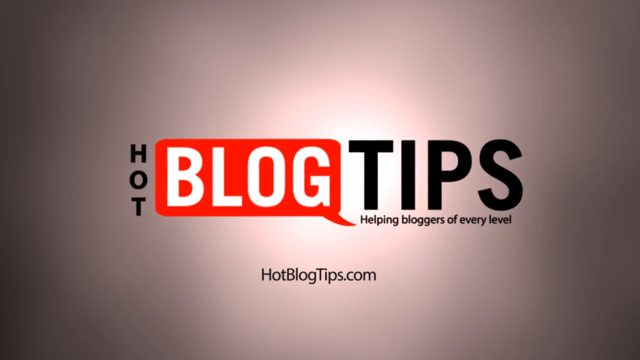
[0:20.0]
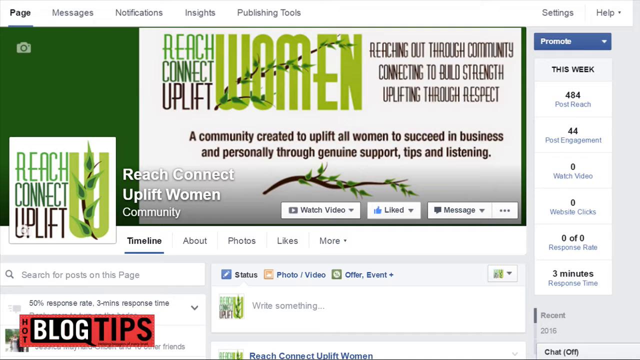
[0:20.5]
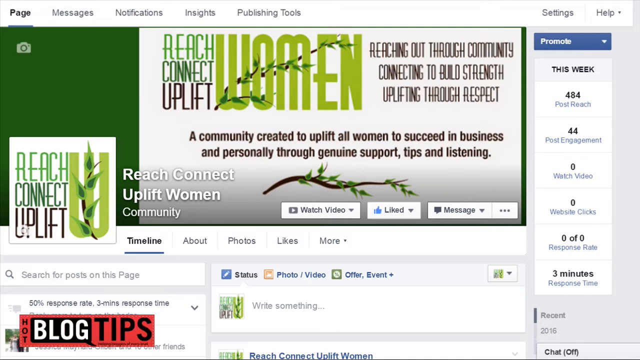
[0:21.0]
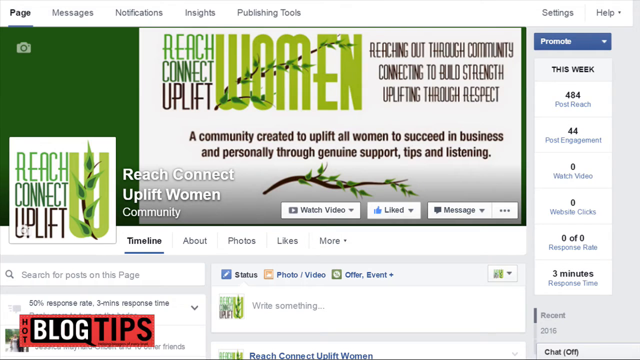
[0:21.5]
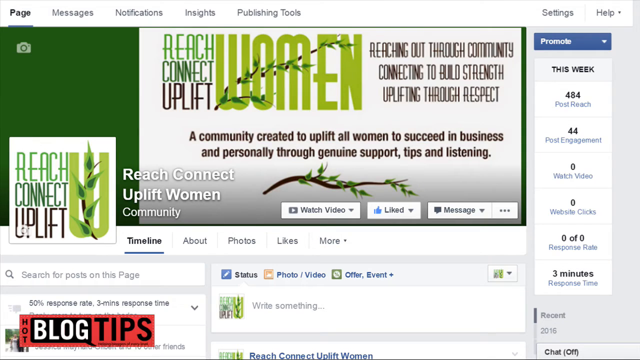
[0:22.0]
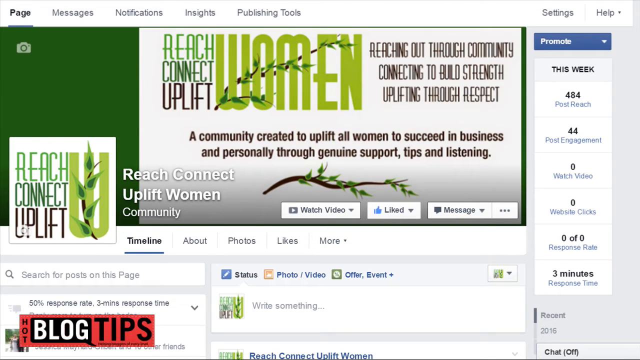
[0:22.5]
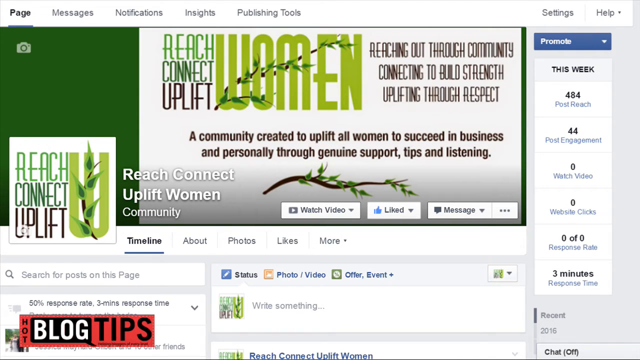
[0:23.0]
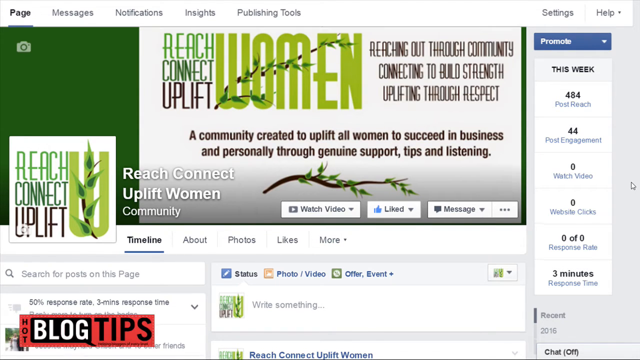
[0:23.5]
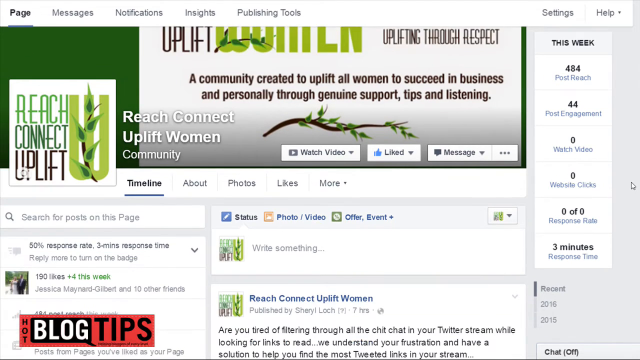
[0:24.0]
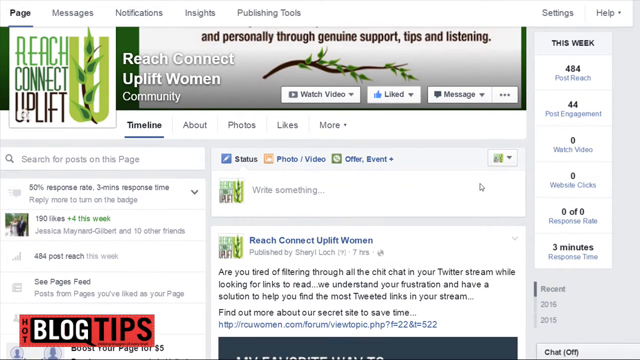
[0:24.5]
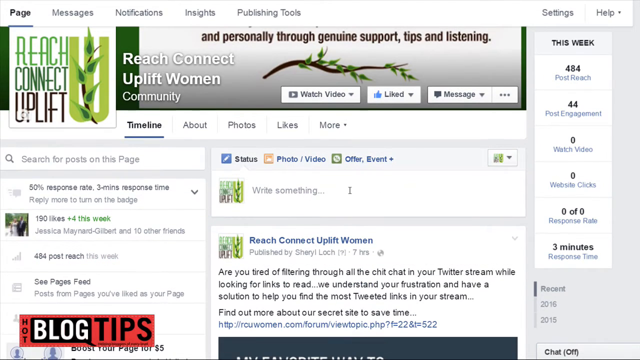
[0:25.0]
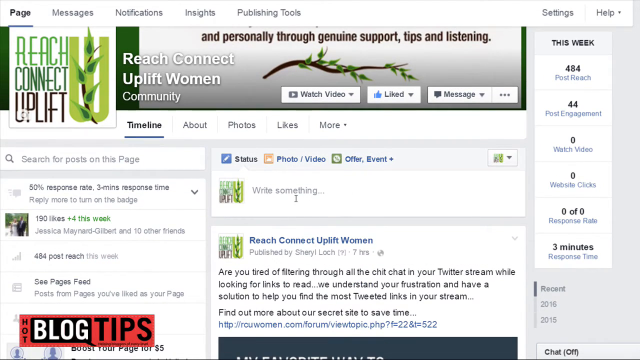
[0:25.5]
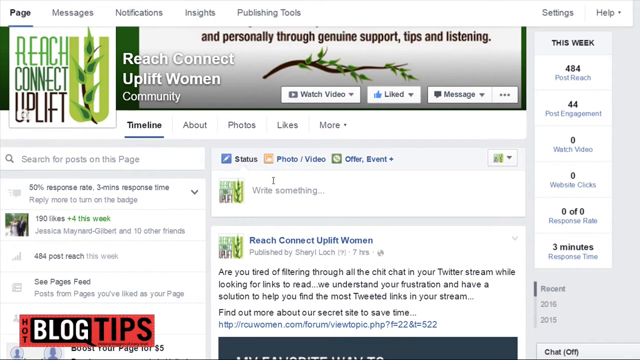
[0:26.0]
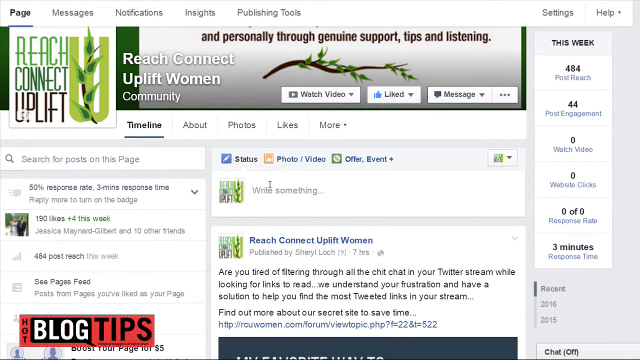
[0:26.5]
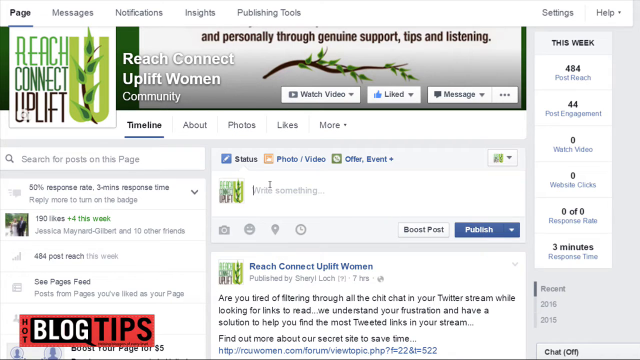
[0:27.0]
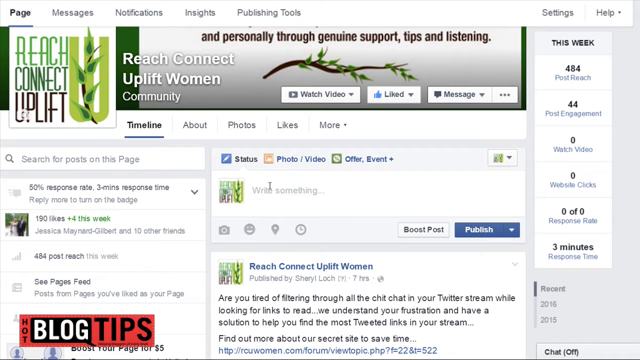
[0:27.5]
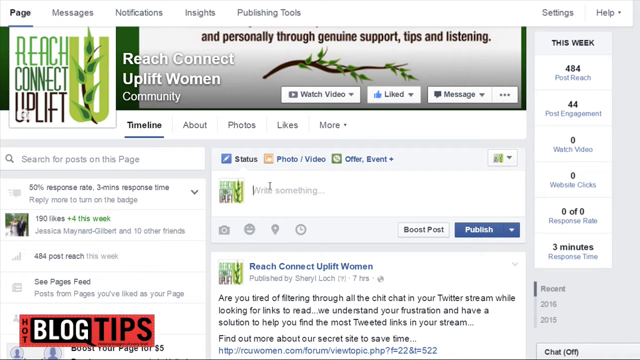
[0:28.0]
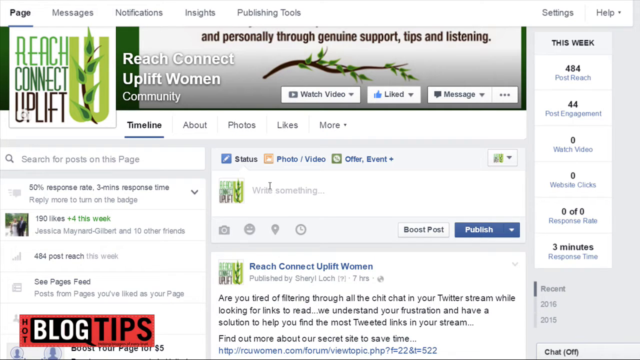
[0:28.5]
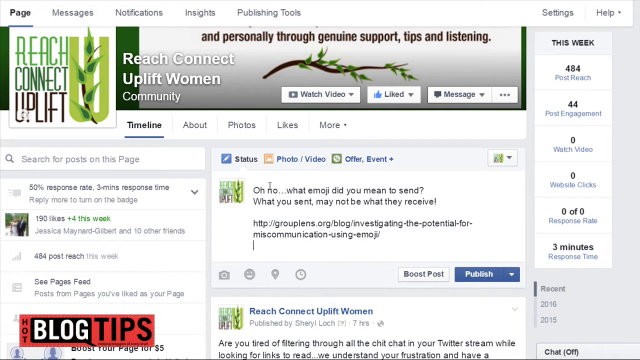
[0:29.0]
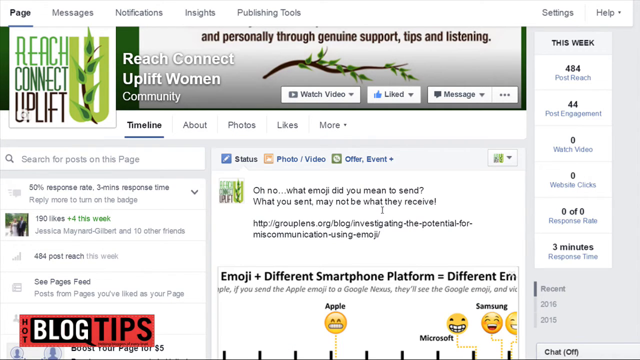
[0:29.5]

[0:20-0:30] The title reads "Hot Blog Tips, helping bloggers of every level, hotblogtips.com". The view then pans over to what seems to be a web page that says "Reach Connect Uplift Women", with a branch of some type of plant. Text reads "Reaching out through community, connecting to building strength, uplifting through respect", along with some other information; the page seems to be a self-help type of page for women. "Reach Connect Uplift Women" appears again with "community" underneath. There are some links, probably three, showing likes and messages. The view then goes down into the body of the page, where there are some comments.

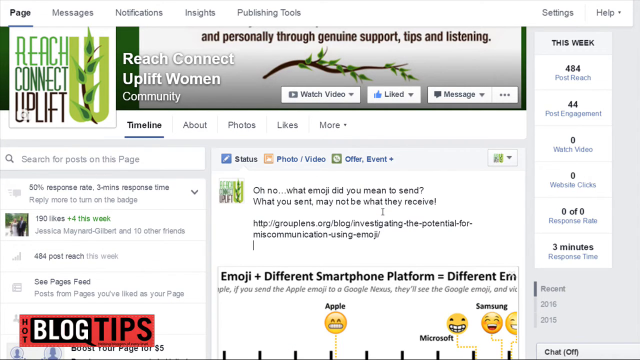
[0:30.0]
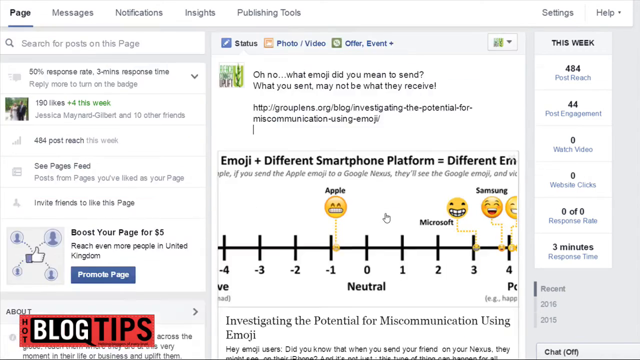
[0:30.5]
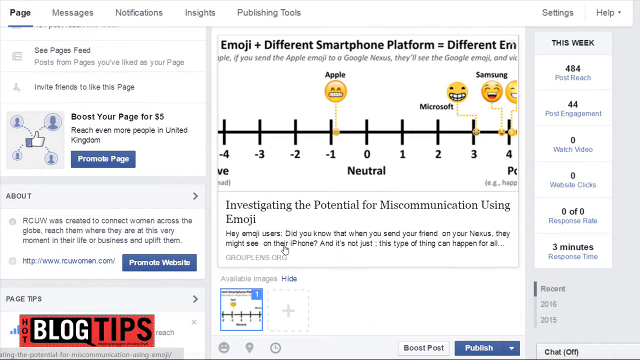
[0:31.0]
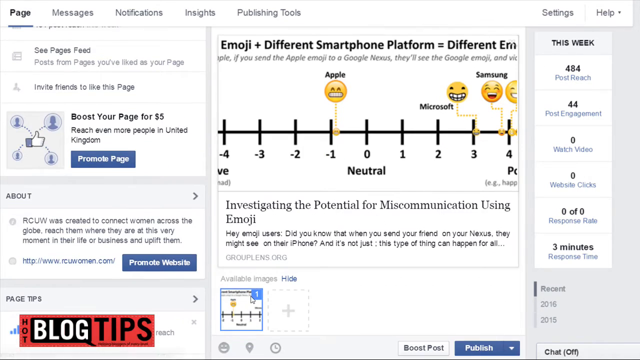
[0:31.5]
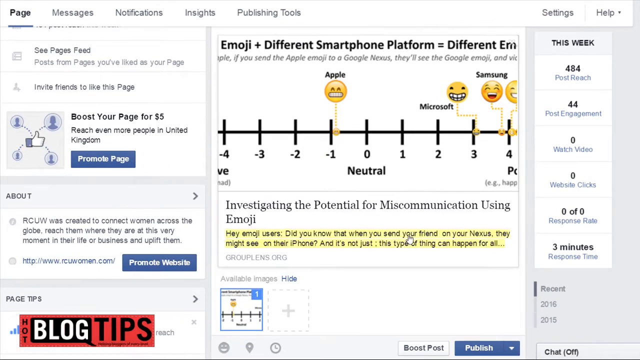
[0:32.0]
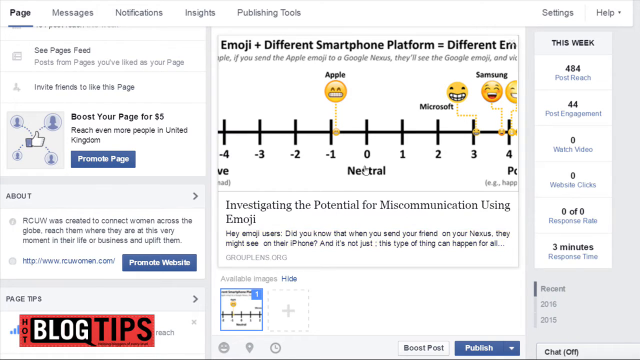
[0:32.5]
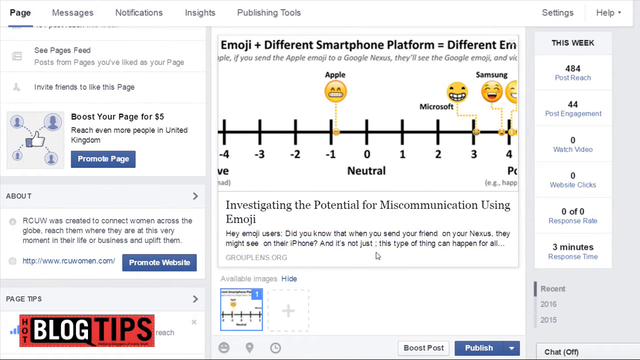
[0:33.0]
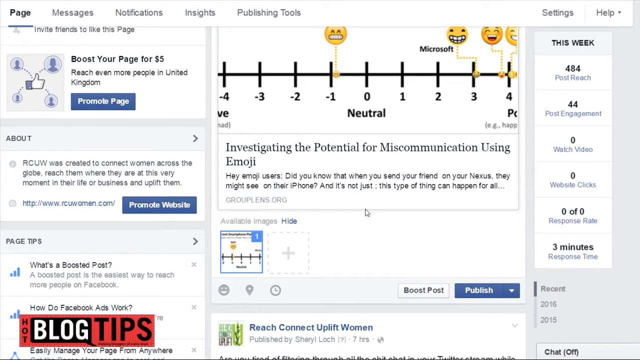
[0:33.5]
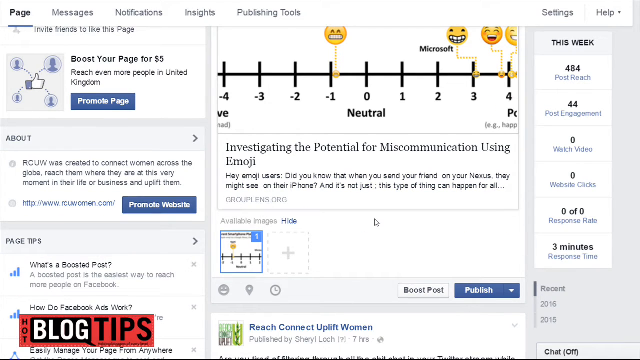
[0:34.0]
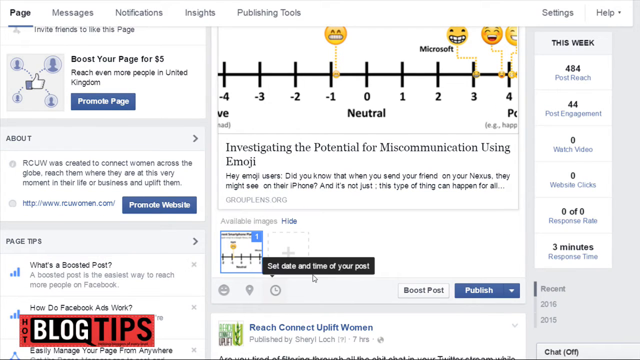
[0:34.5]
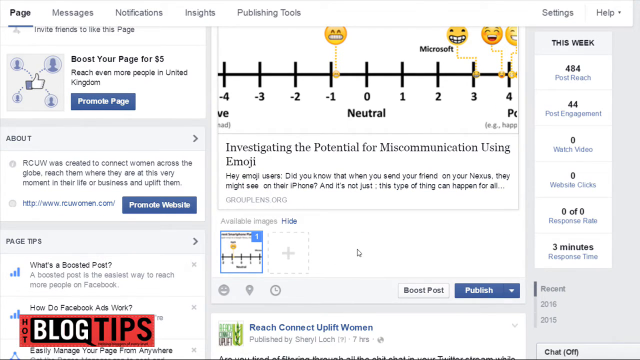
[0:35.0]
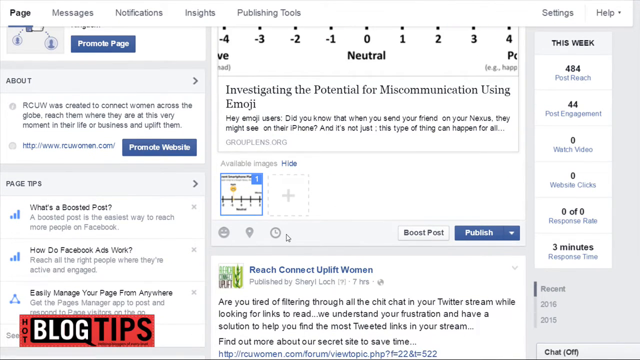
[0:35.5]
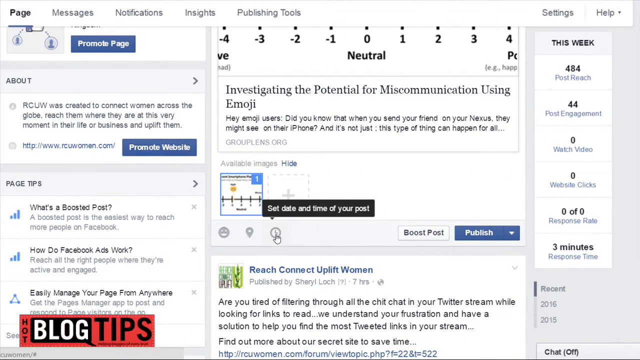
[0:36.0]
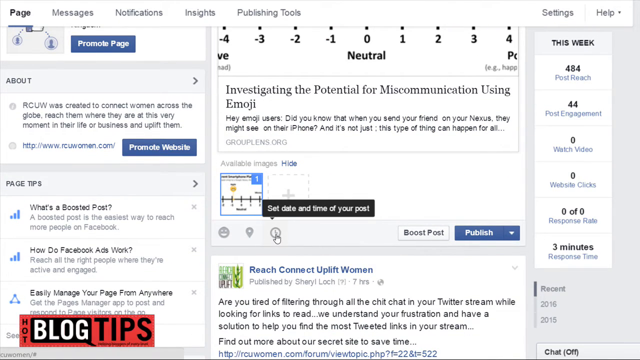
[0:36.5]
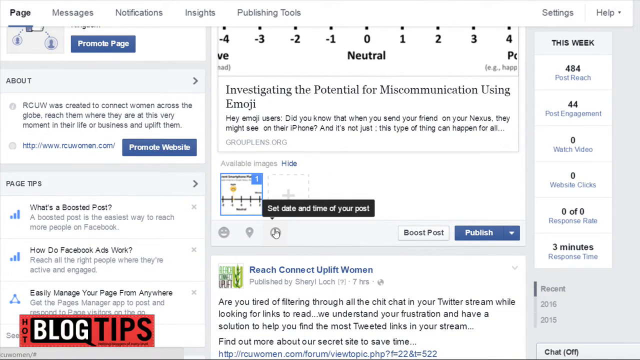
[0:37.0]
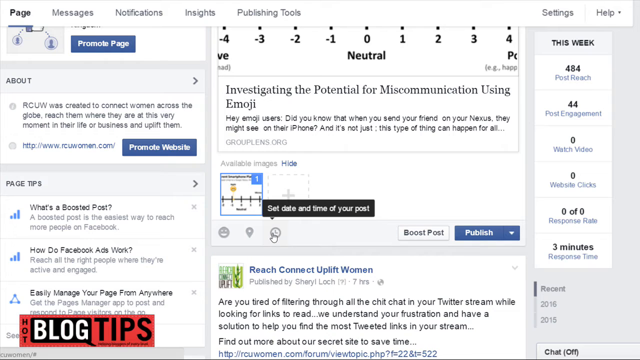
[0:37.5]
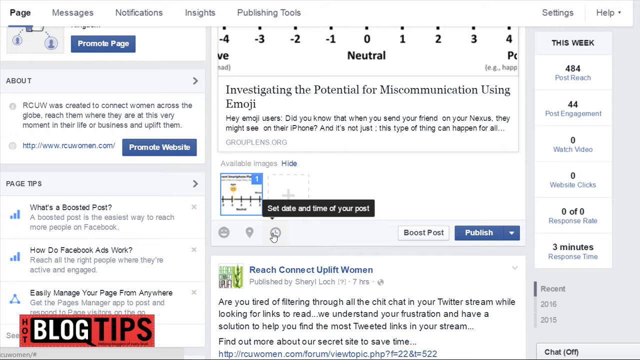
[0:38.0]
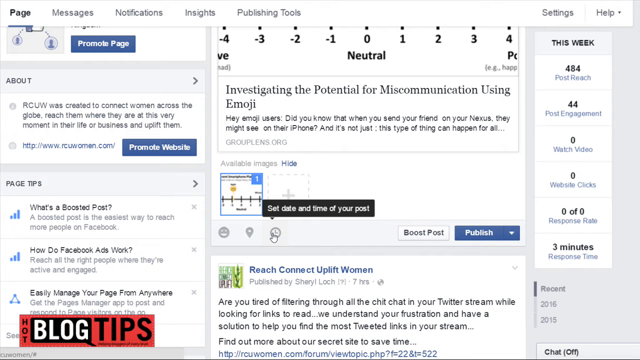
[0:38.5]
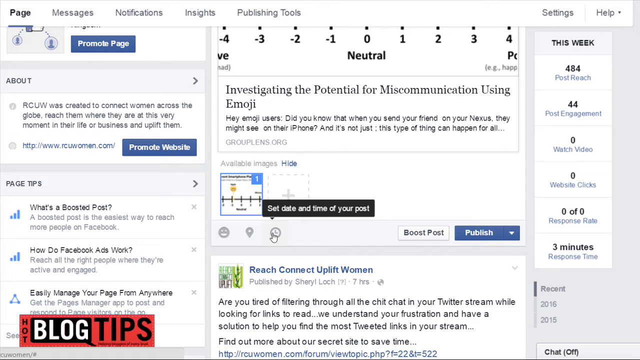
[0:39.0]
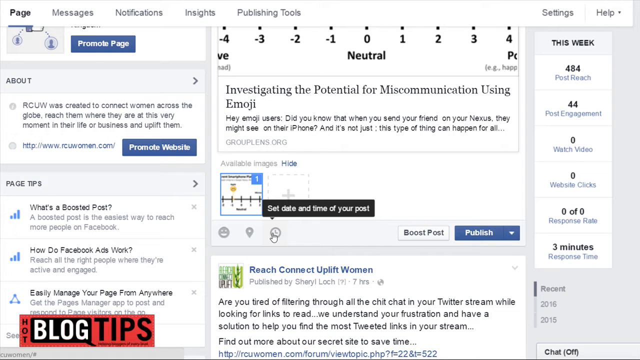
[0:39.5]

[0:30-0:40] The Reach Connect Uplift Women page is shown as the user scrolls down a bit, revealing a comment that says "oh no, what emoji did you mean to send? What you sent may not be what they received." Below it is what looks like some type of web address. Scrolling further shows a section about emoji on different smartphone platforms with more information and a few emojis. A paragraph at the end that says "hey, emoji users" is highlighted and turns yellow, followed by a bit of detail. The user then highlights an icon for setting the date and time of the post.